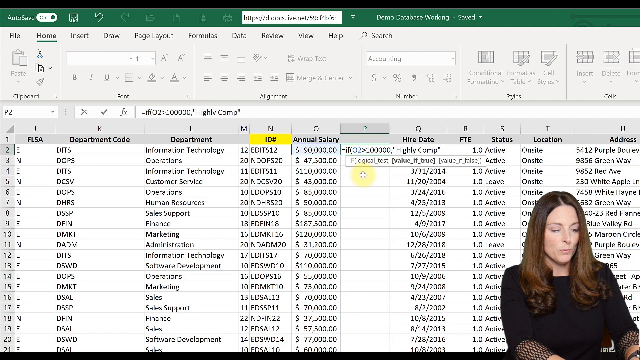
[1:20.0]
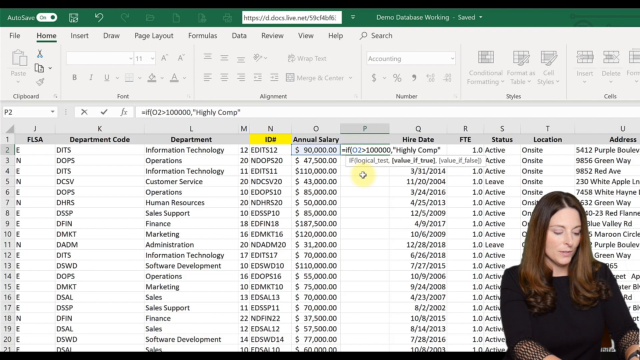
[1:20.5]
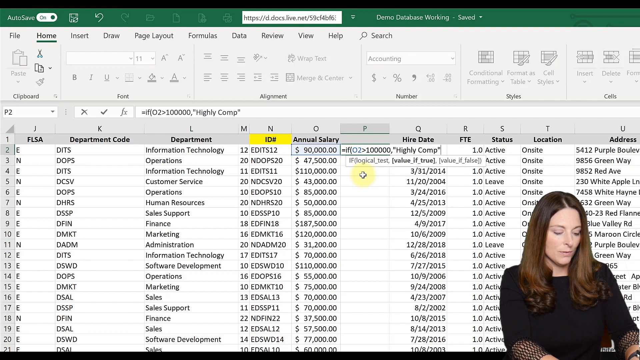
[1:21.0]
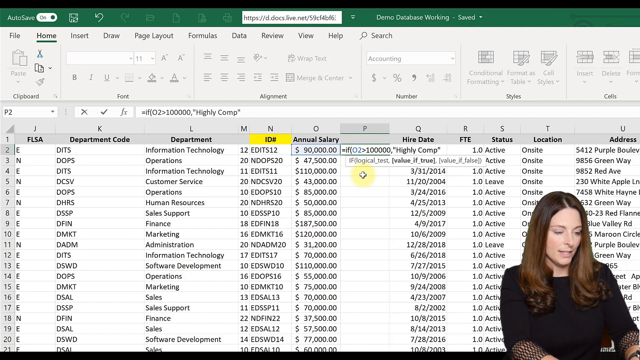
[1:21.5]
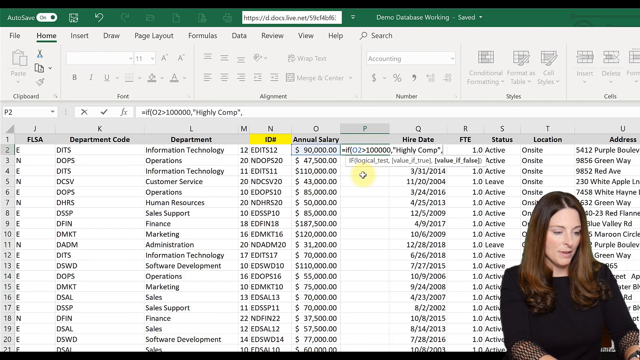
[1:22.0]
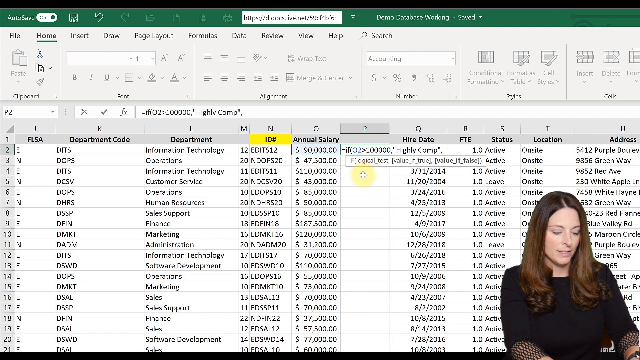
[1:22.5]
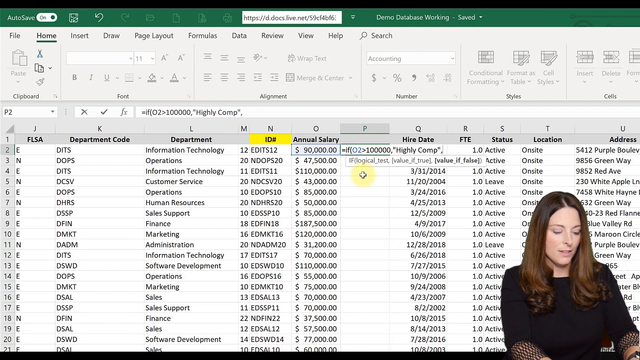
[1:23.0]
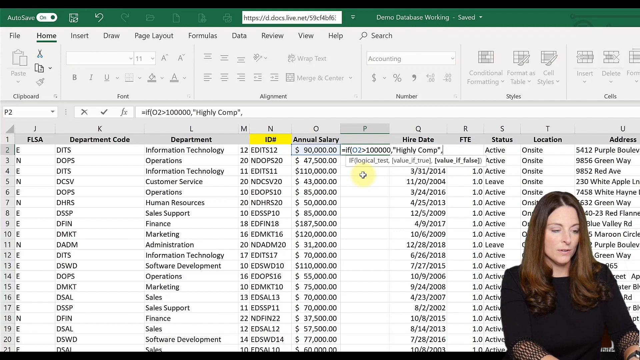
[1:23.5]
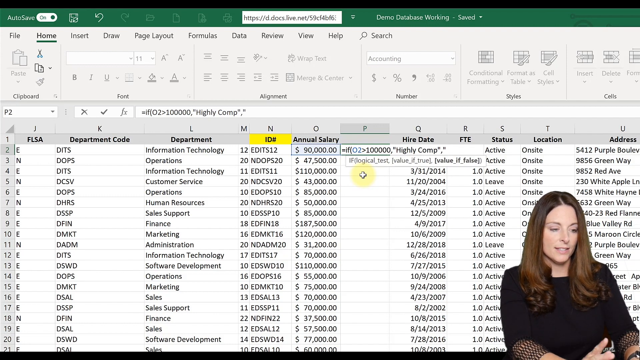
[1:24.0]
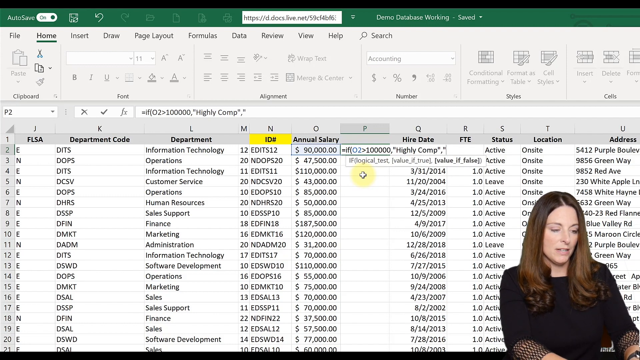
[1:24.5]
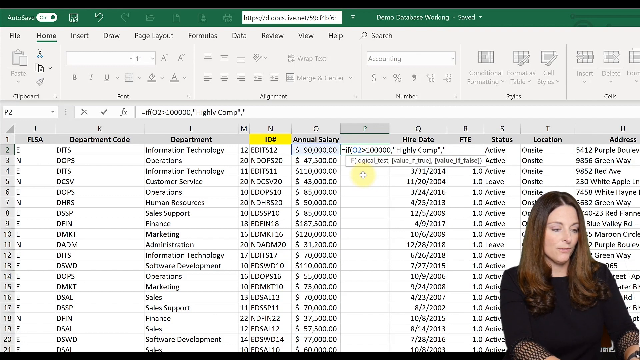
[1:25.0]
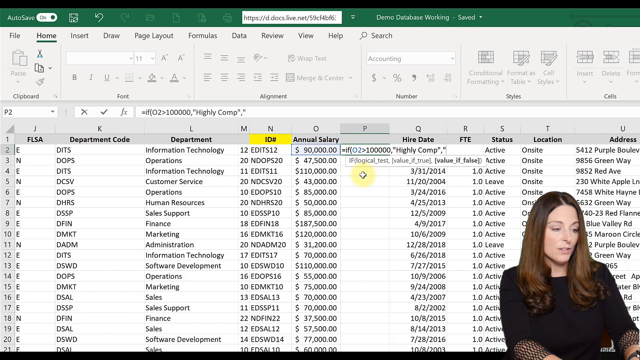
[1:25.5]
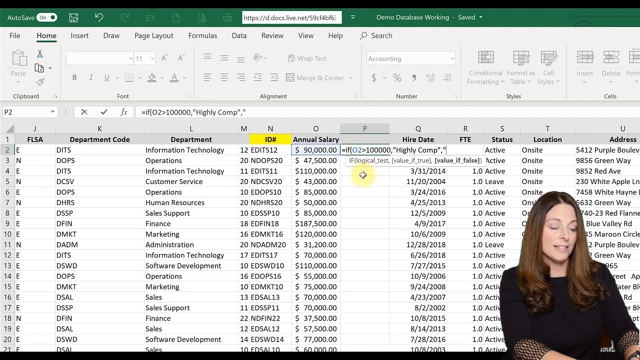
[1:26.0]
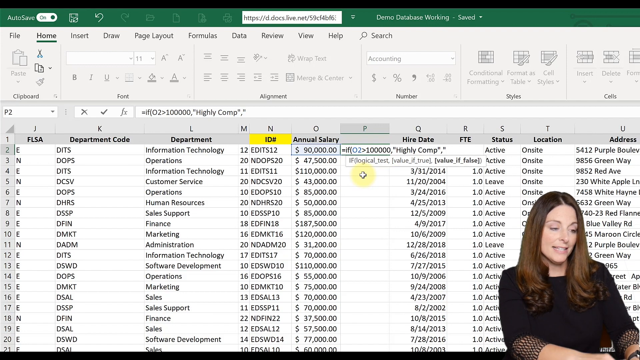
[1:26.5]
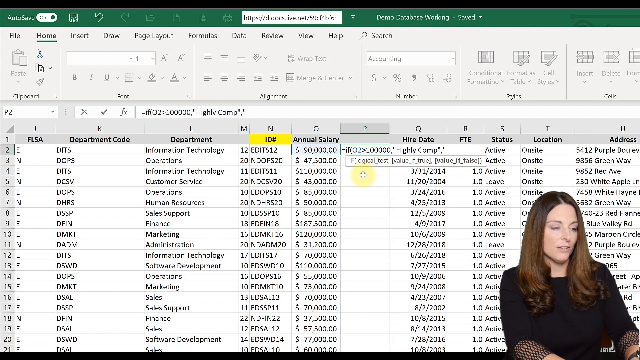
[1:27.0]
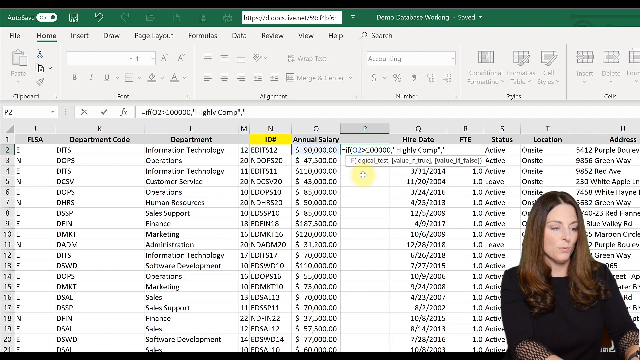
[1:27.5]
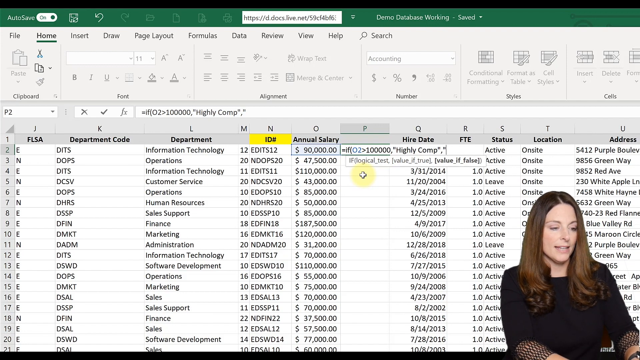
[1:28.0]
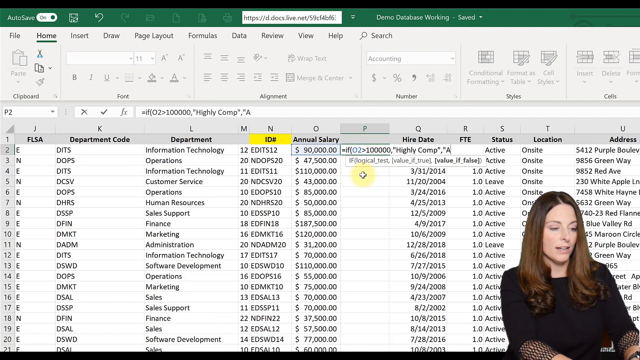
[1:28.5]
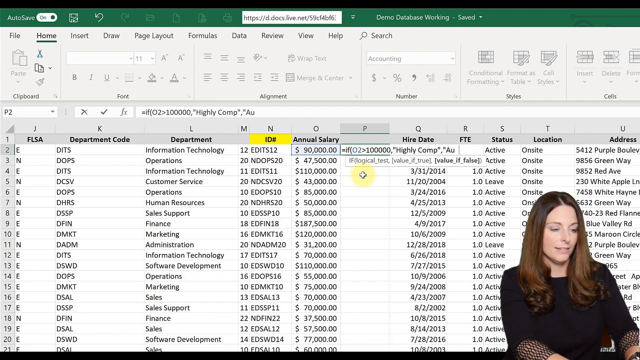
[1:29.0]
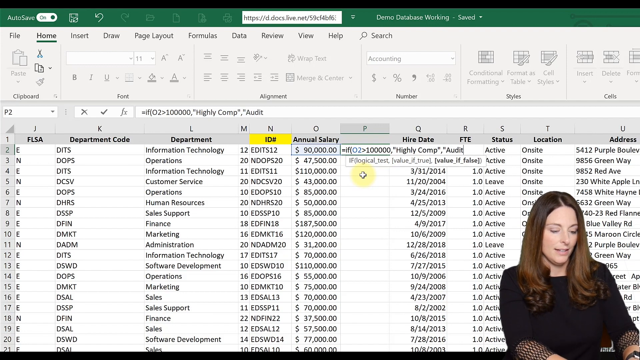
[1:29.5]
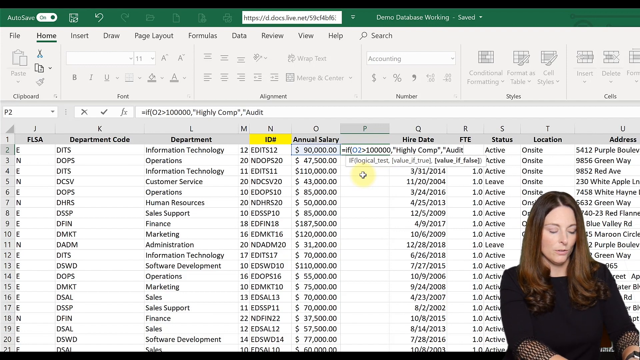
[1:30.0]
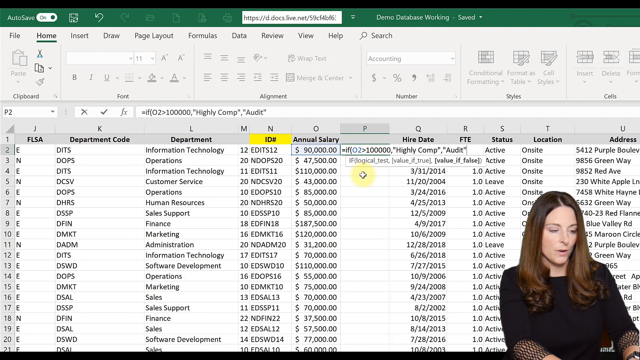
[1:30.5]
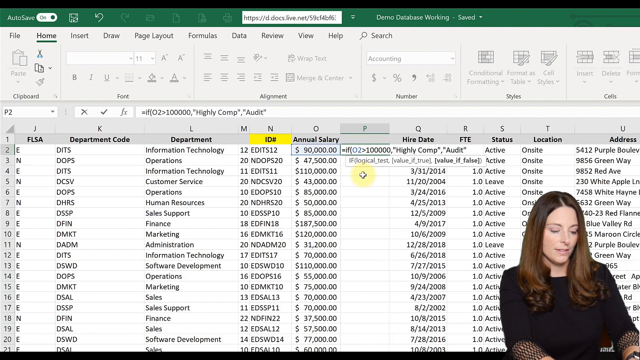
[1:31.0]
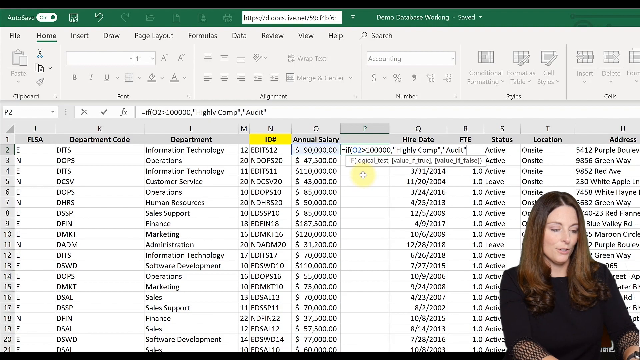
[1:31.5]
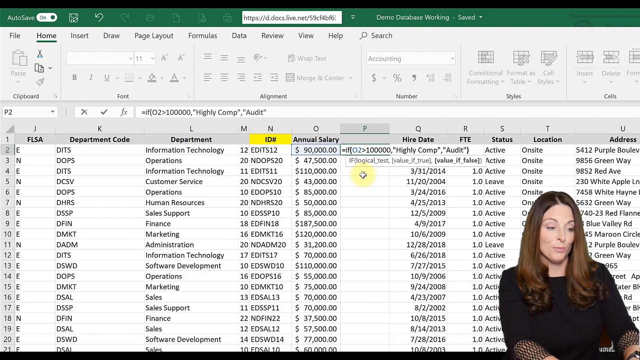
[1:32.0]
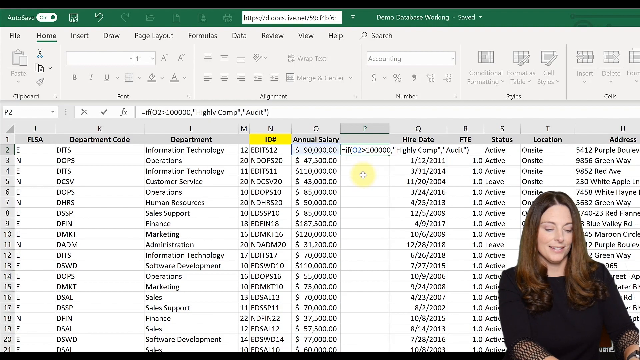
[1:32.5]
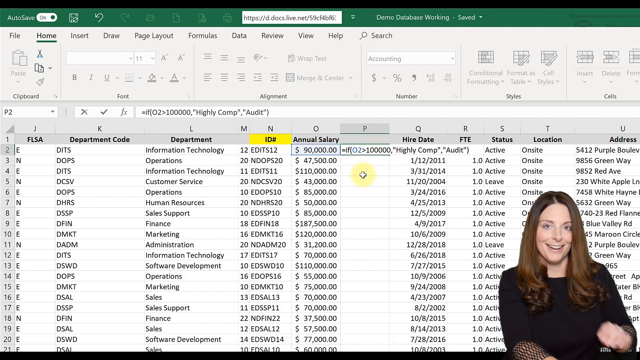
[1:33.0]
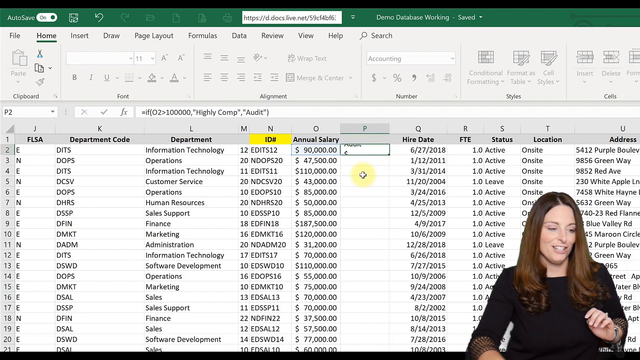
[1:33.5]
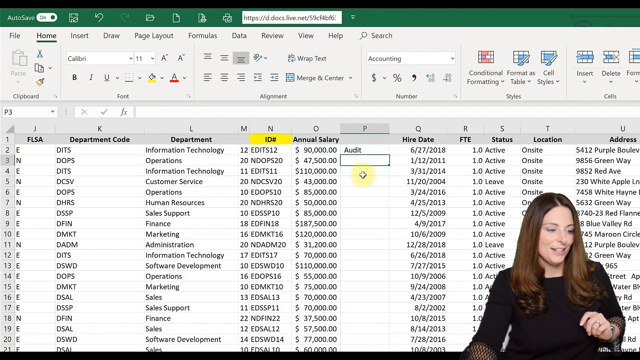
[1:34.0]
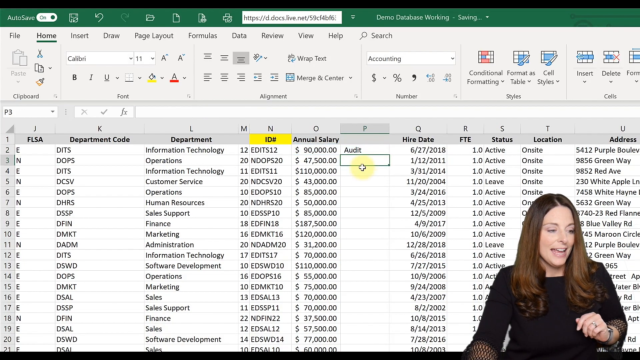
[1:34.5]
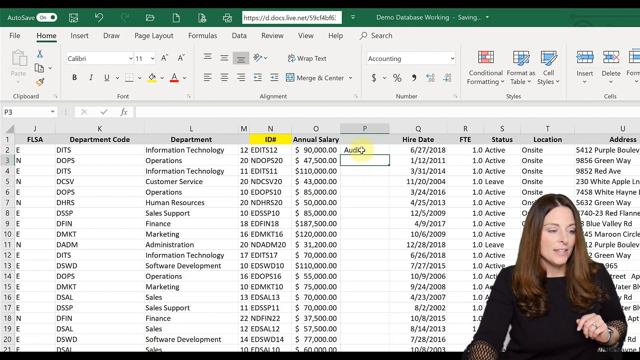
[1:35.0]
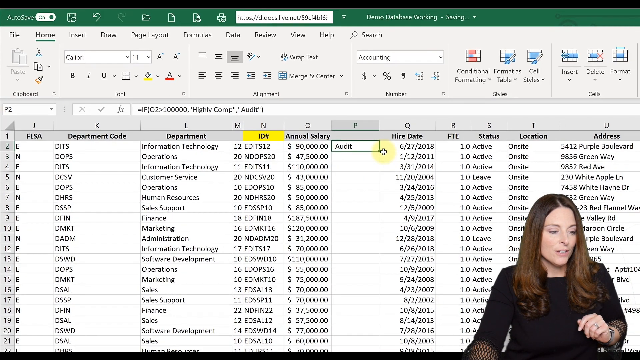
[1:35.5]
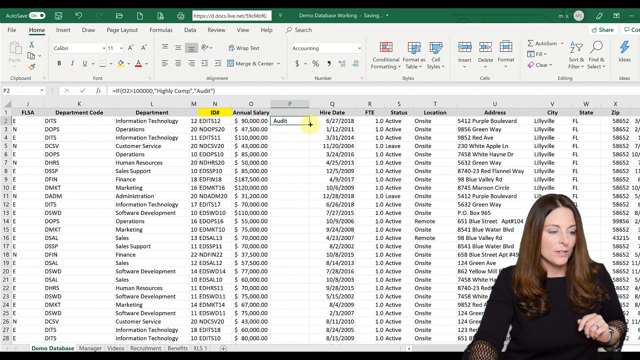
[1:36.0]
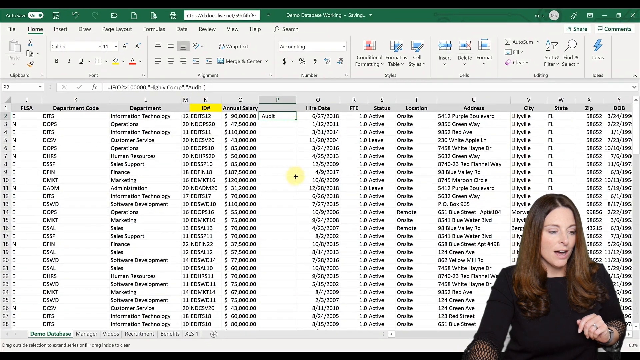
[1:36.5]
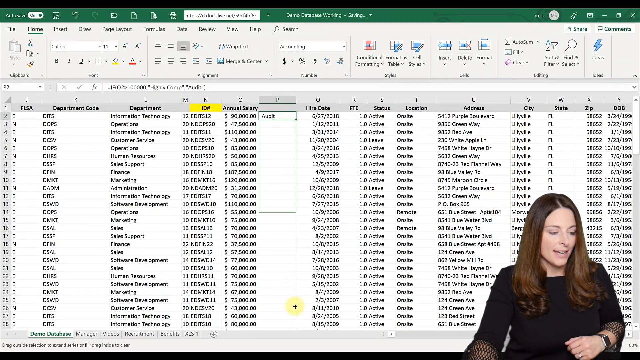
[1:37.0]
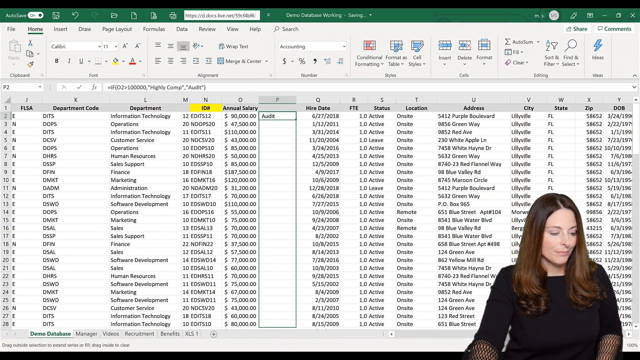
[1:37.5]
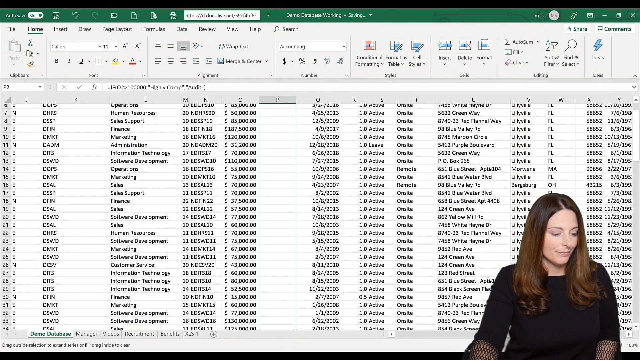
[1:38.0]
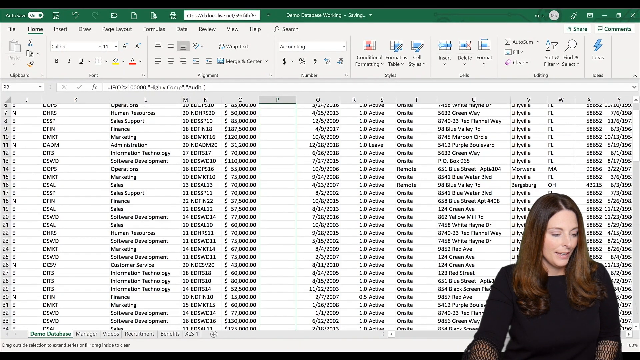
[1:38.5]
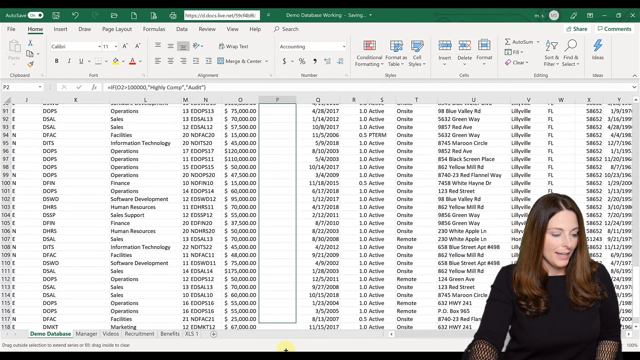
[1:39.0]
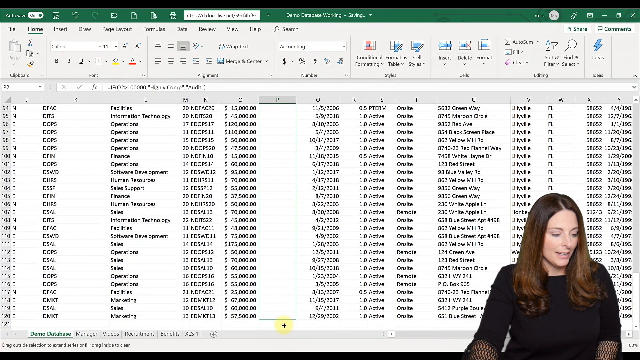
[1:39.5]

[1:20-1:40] An Excel spreadsheet is in the background, which is her computer screen, and a Caucasian woman in her upper twenties on the right is talking and typing on a keyboard at the same time. She has typed code into row two of column P, which is still highlighted in green; column O, titled annual salary, is to the left, and column Q, titled hire date, is to the right. She adds a comma, a quotation mark, the word "audit", another quotation mark, and a closing parenthesis. When she finishes, the word "audit" appears in row two of column P. She then zooms out and highlights the column all the way down to about row 120.